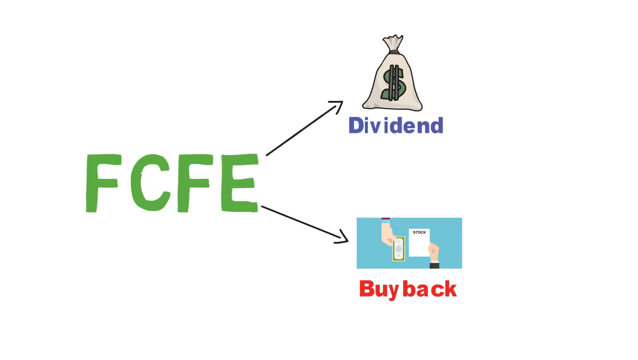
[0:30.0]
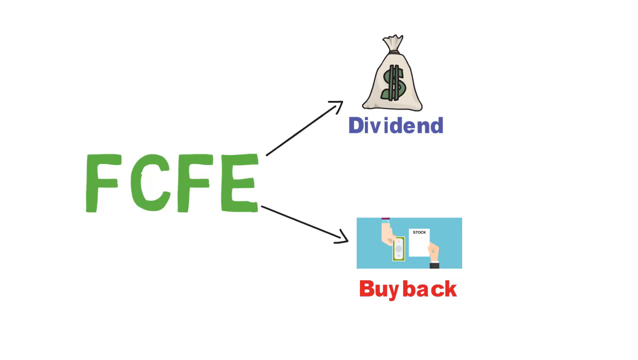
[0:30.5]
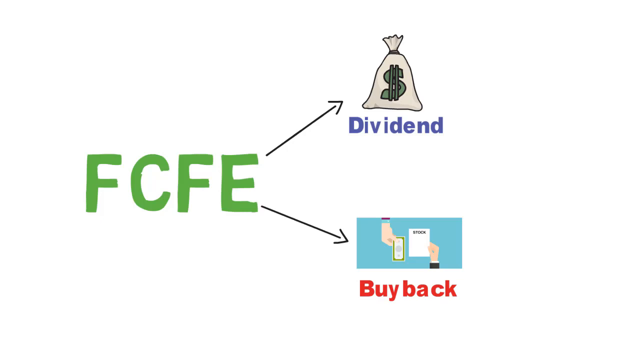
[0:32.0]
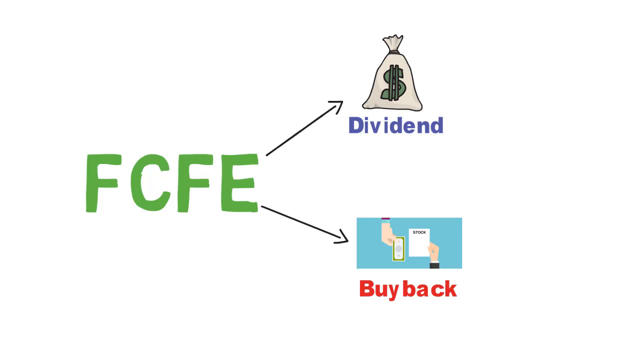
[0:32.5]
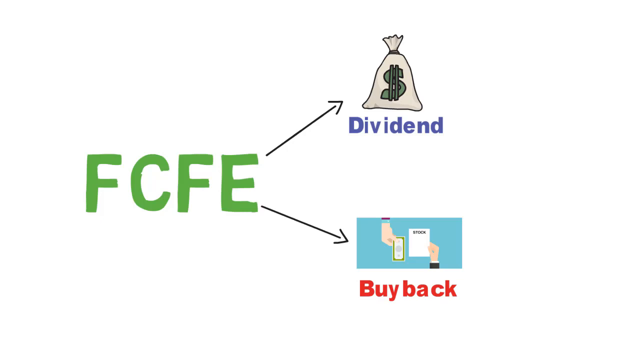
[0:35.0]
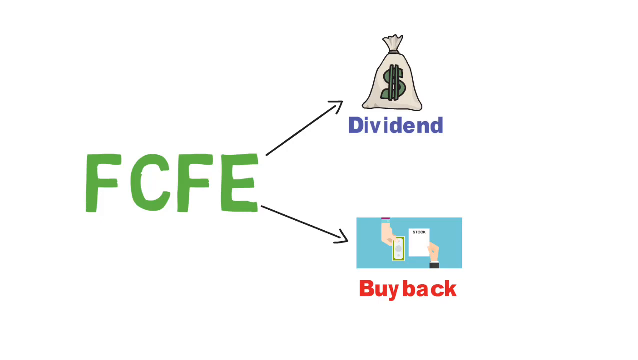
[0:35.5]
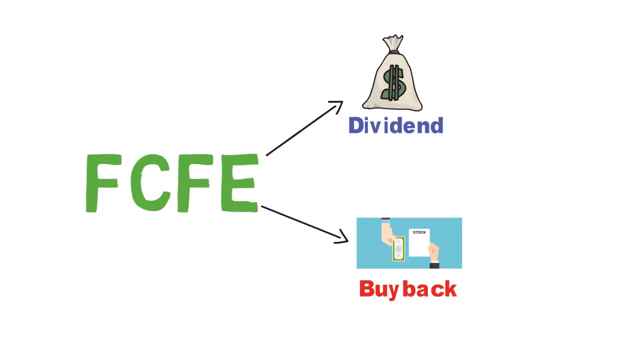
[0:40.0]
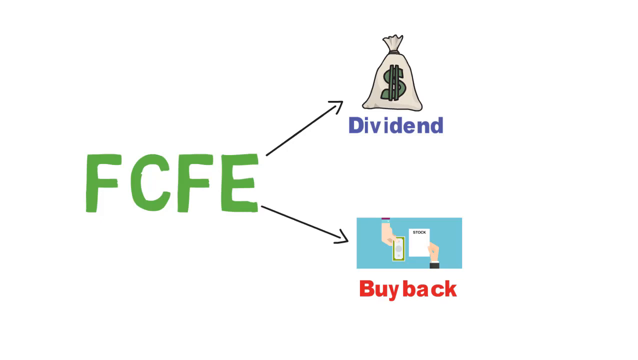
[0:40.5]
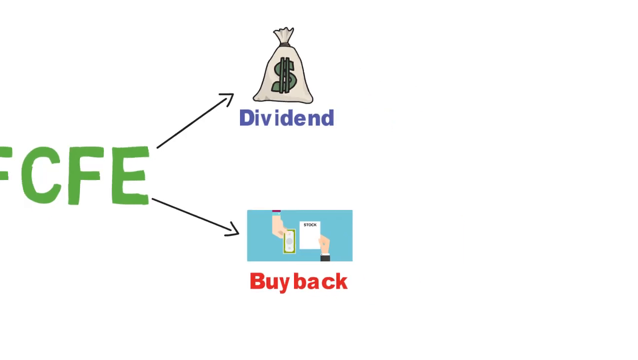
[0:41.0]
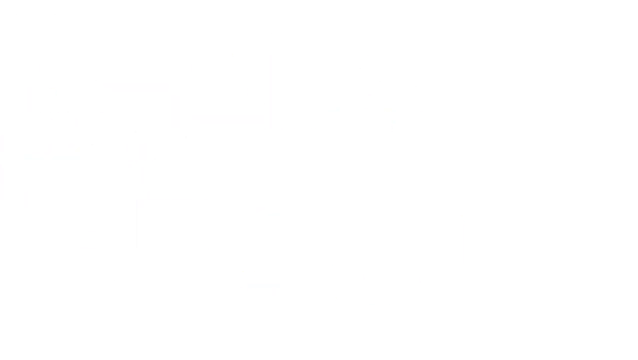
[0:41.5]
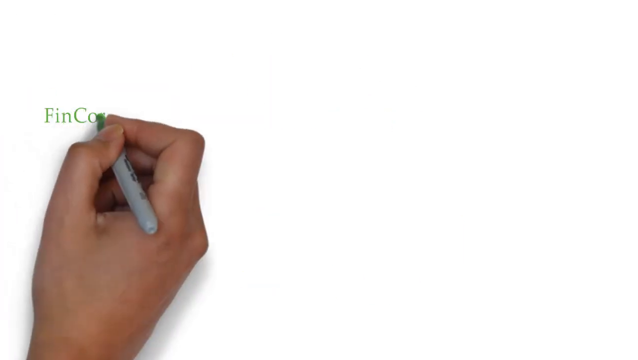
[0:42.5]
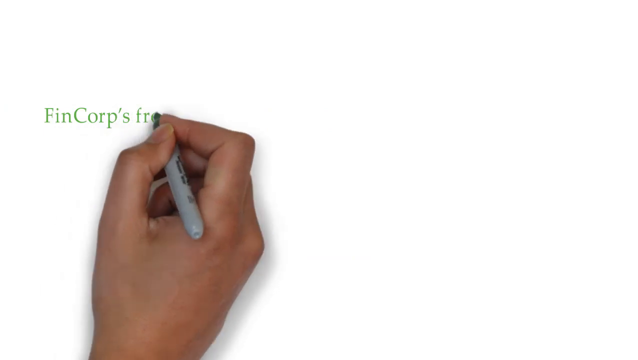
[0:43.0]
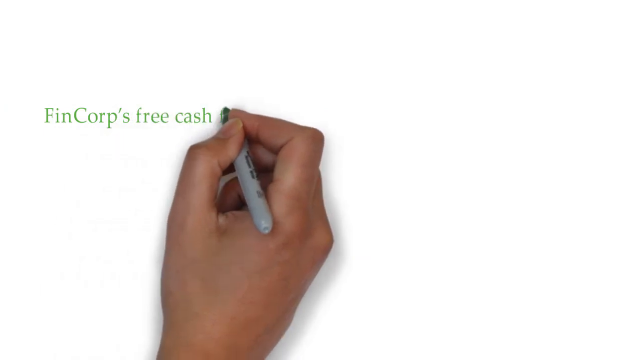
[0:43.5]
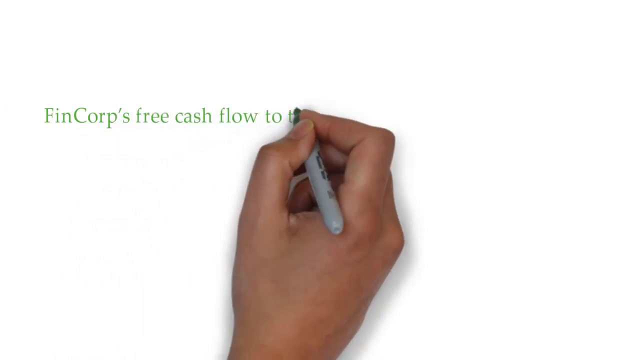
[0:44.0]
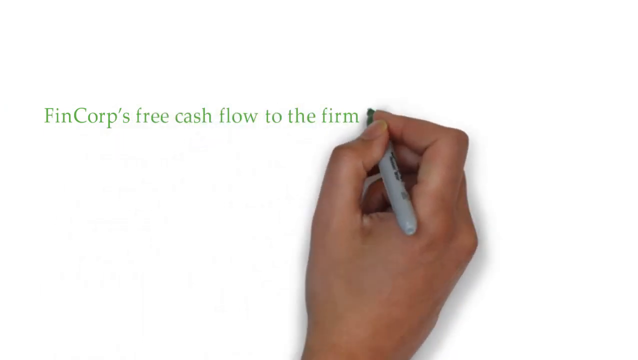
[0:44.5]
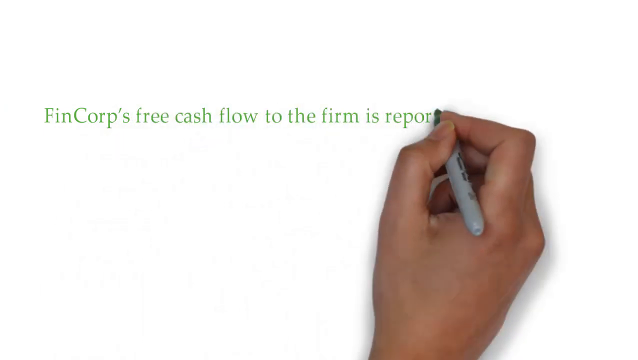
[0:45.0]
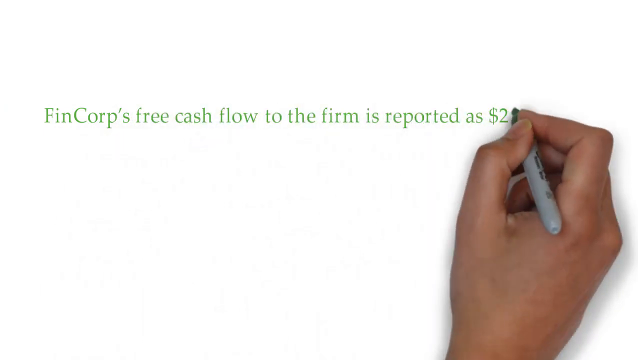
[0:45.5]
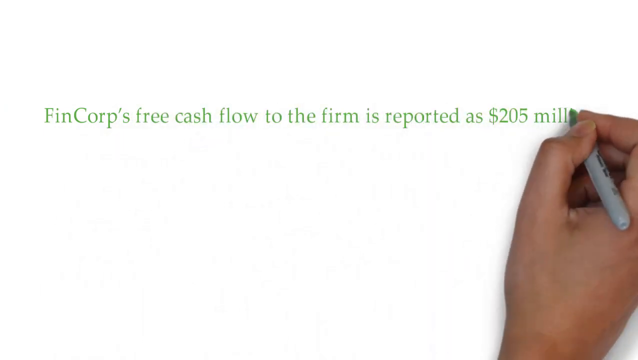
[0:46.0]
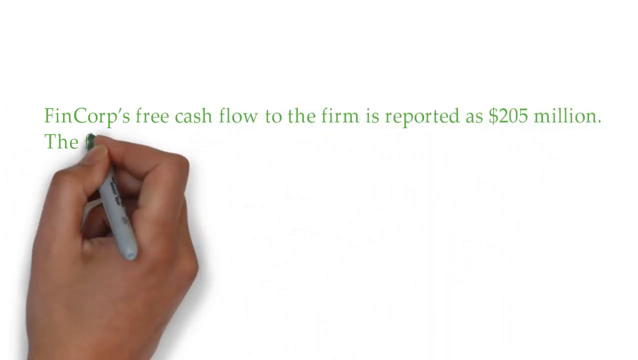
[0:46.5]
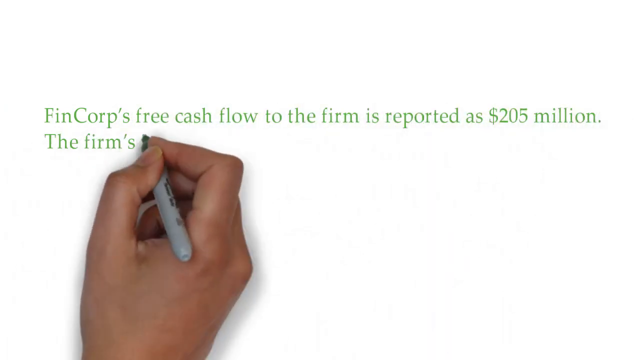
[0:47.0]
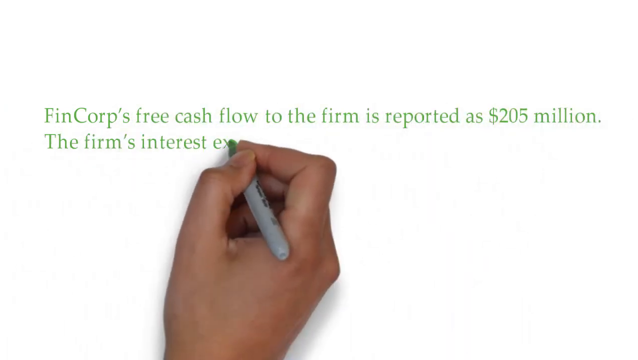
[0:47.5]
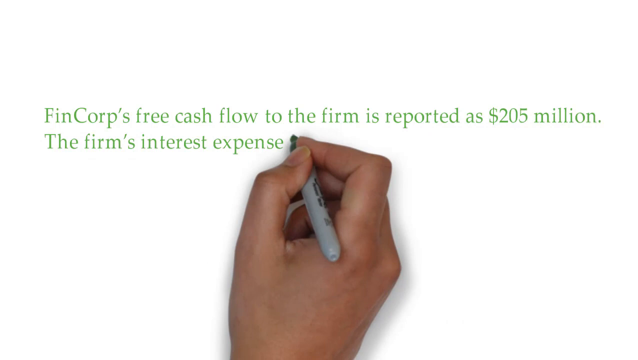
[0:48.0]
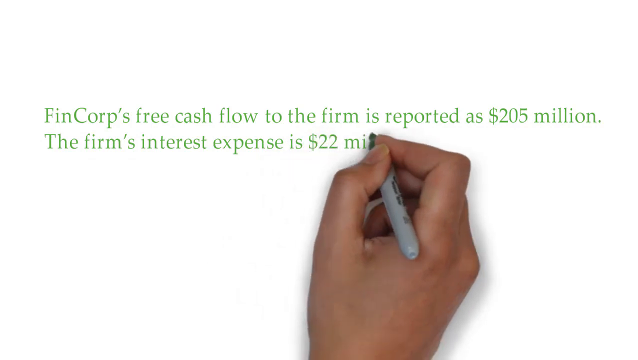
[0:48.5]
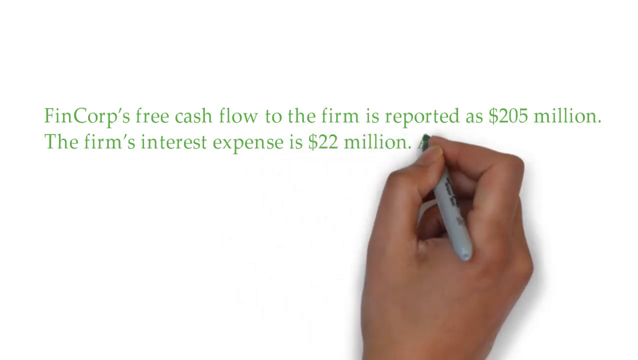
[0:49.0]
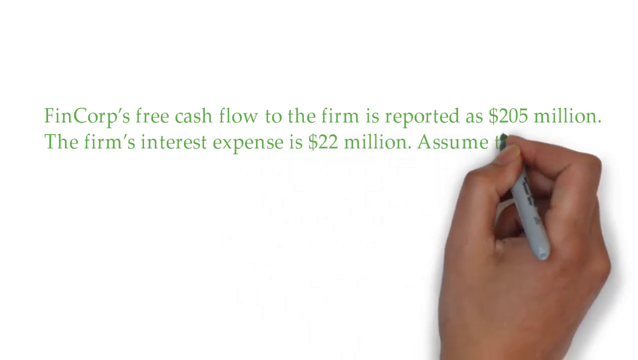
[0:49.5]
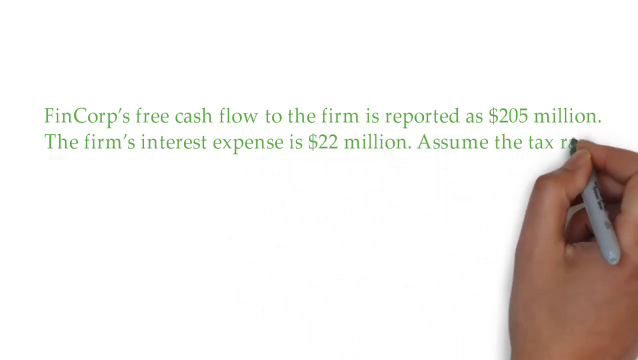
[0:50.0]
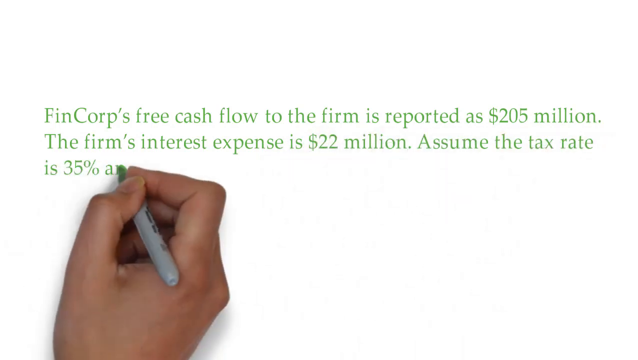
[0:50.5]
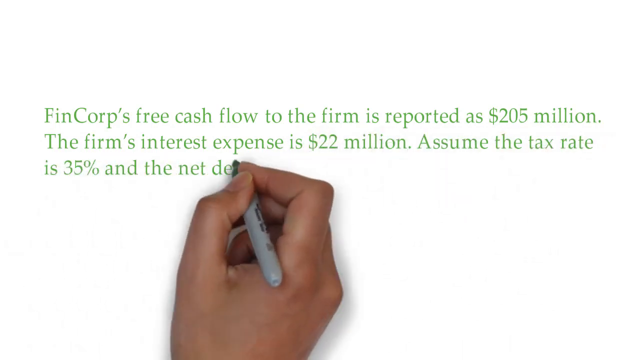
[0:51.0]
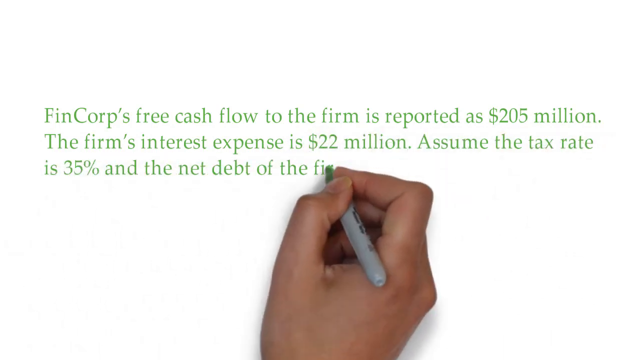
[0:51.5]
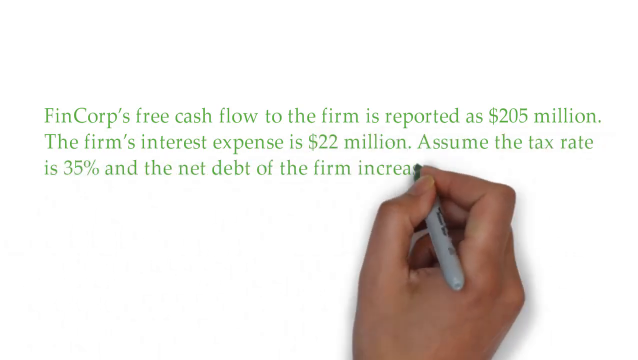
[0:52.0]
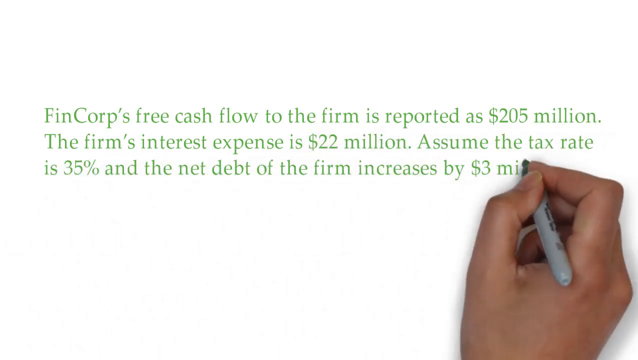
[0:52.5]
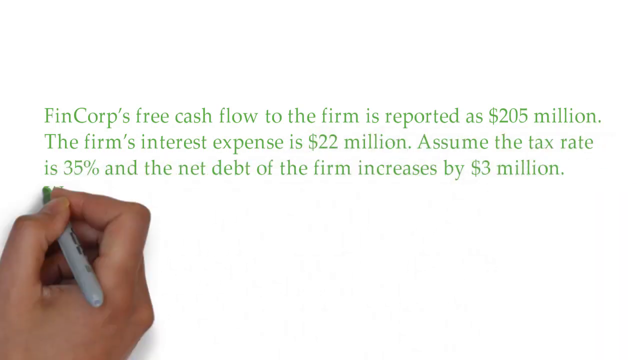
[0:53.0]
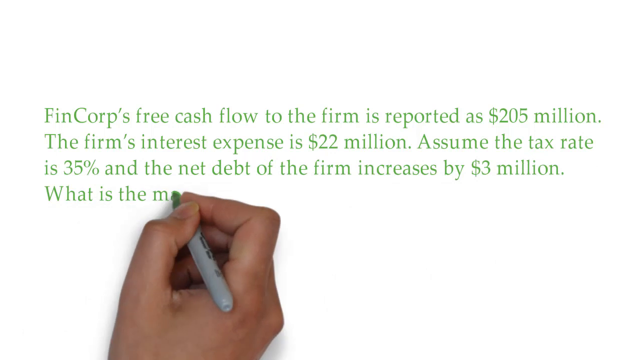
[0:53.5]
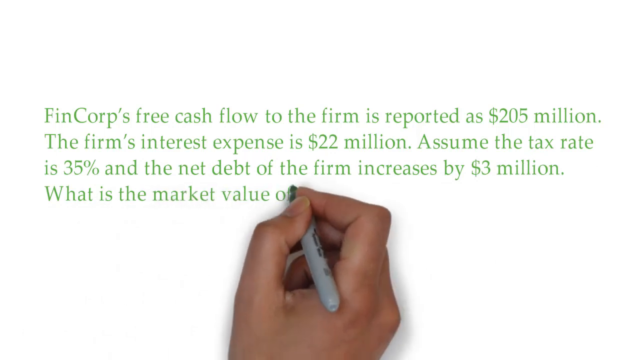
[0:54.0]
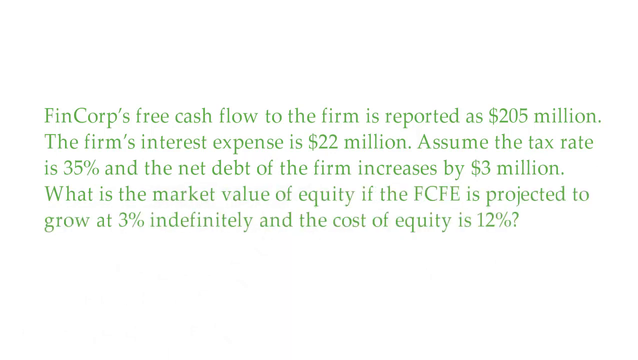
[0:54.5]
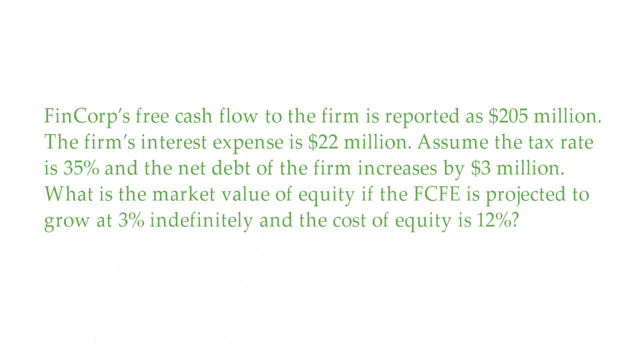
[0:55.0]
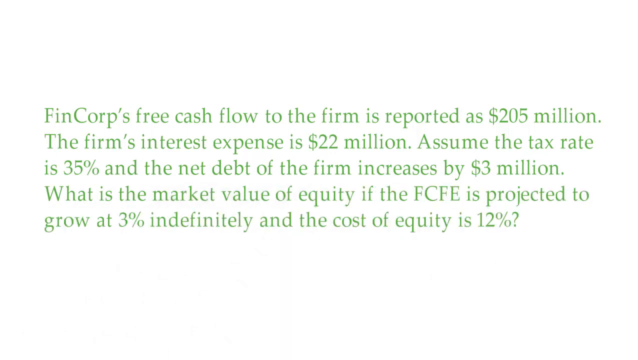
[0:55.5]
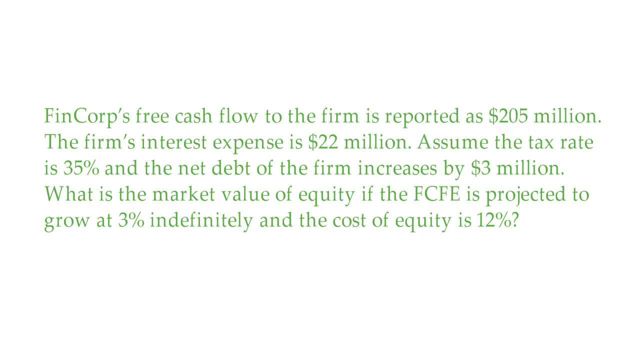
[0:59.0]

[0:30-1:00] On a white background, green text says "FCFE". An arrow drawn upwards points to a white money bag with a green money symbol, with purple text beneath it that says "dividend". A black arrow points down to a teal colored graphic showing a hand holding money and a person holding a piece of paper that says "stock", with red text beneath it that says "buy back". The view slides to the left, and a hand comes in holding a green marker and writes: "FinCorps free cash flow to the firm is reported as $205 million. The firm's interest expense is $22 million. Assume the tax rate is 35% and the net debt of the firm increases by $3 million. What is the market value of equity if the FCFE is projected to grow at 3% indefinitely and the cost of equity is 12%?"